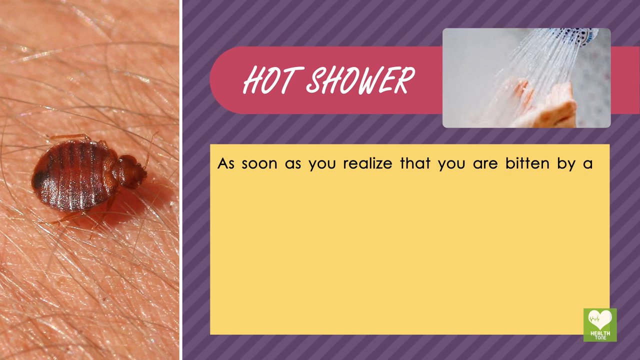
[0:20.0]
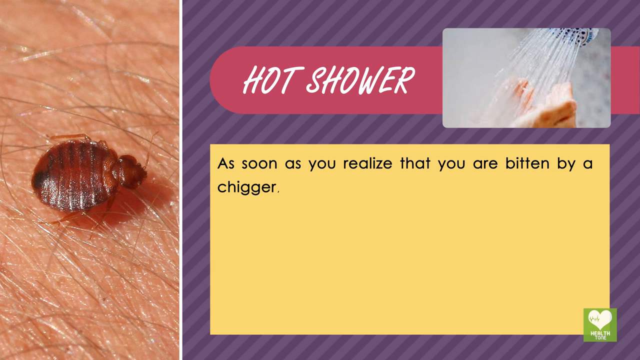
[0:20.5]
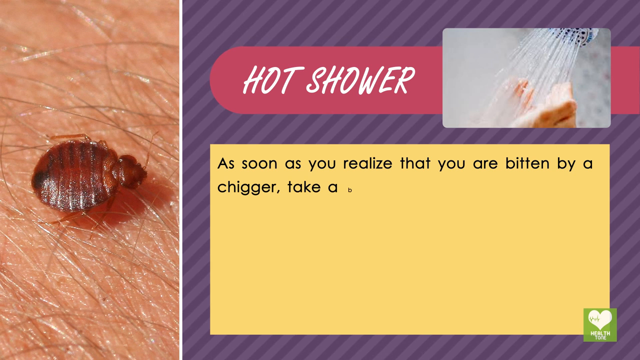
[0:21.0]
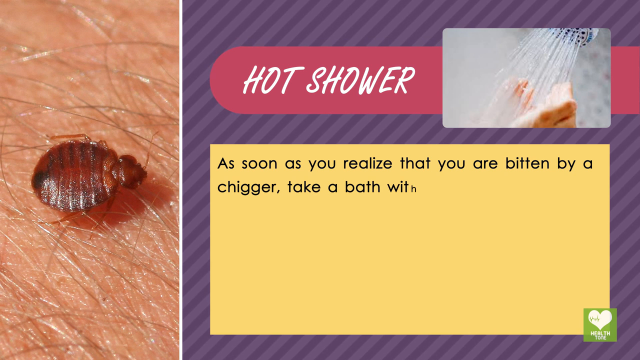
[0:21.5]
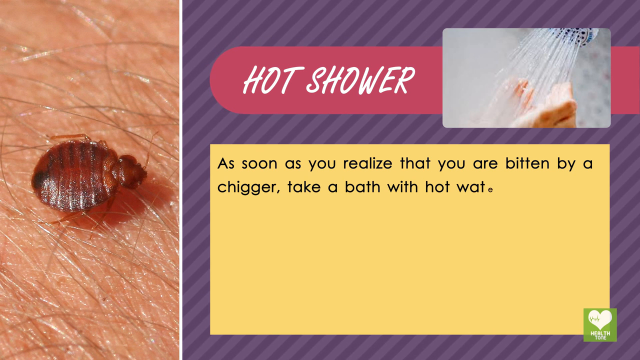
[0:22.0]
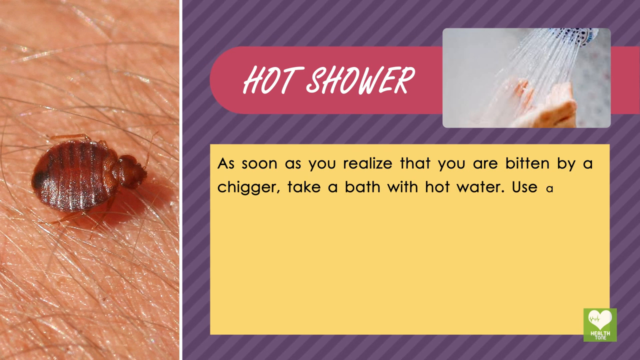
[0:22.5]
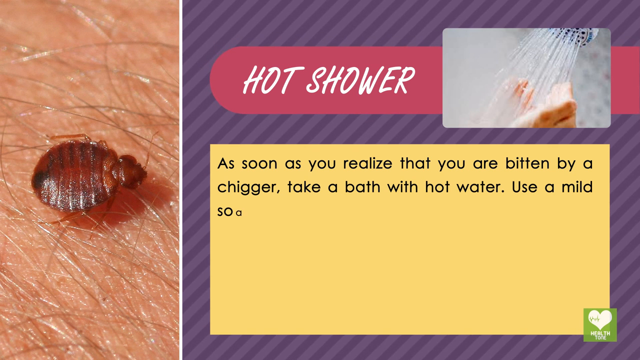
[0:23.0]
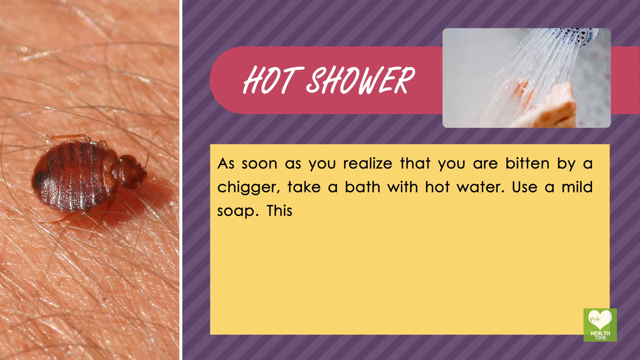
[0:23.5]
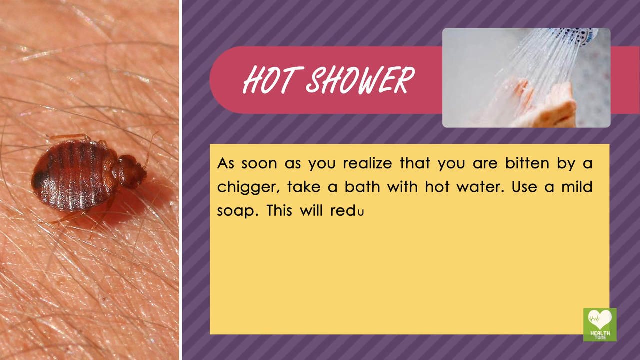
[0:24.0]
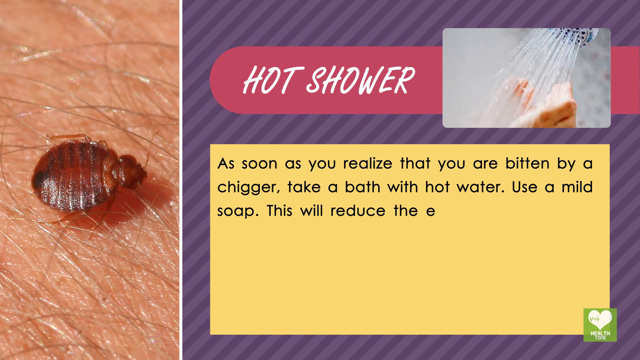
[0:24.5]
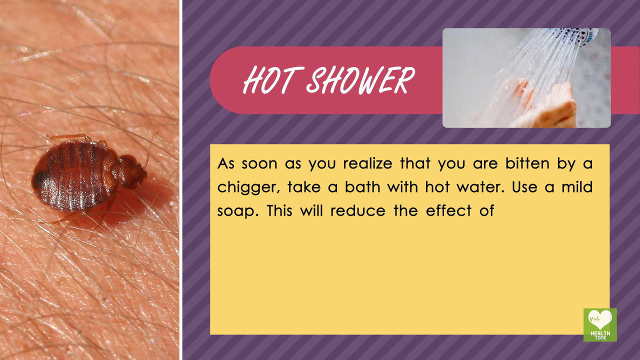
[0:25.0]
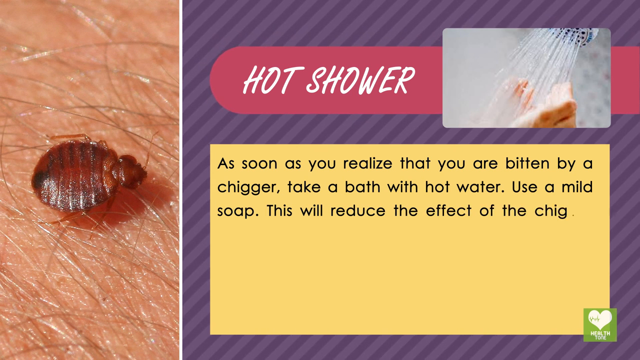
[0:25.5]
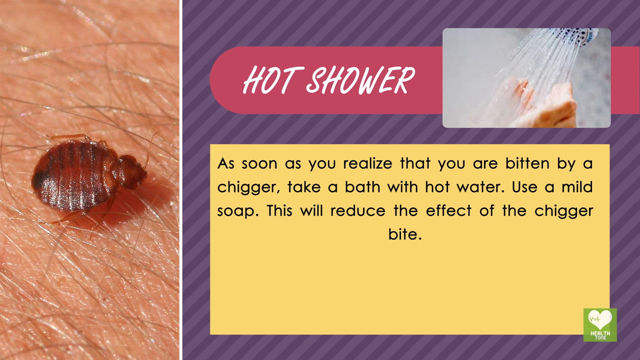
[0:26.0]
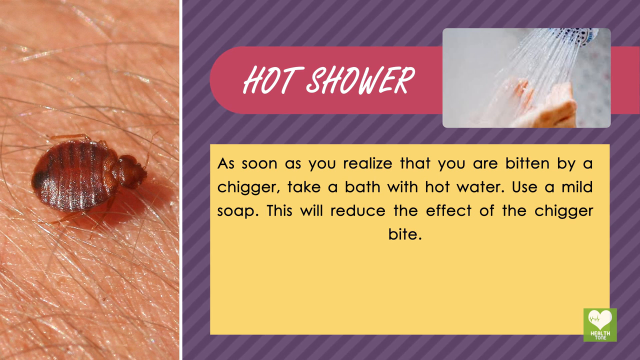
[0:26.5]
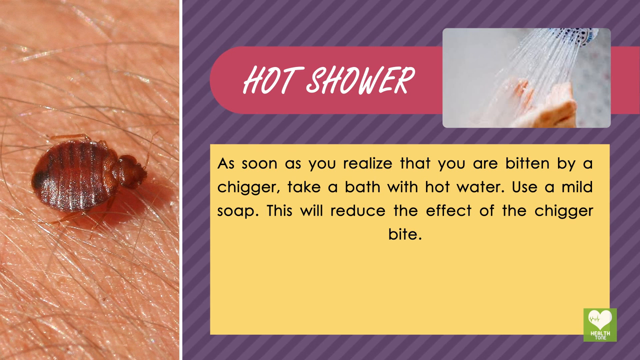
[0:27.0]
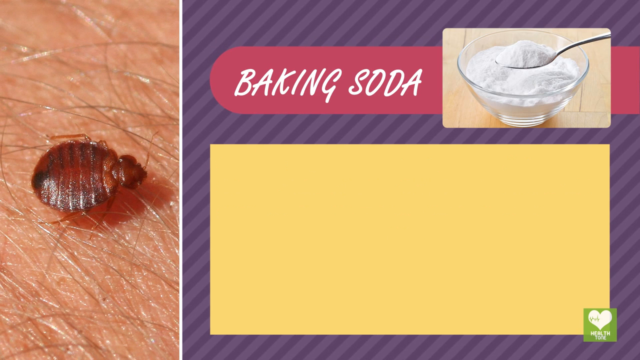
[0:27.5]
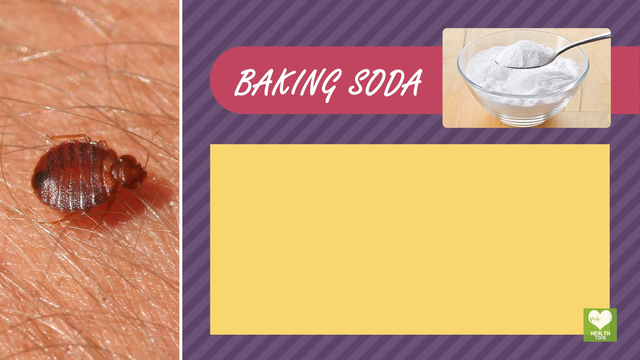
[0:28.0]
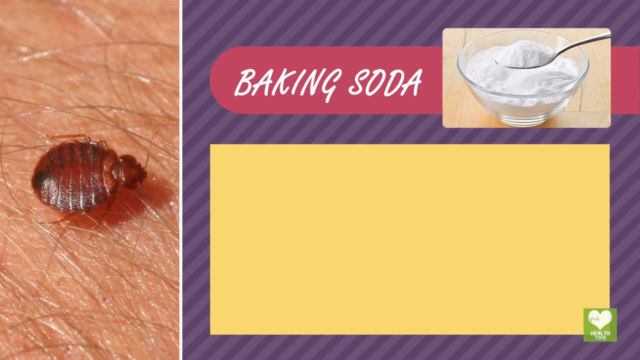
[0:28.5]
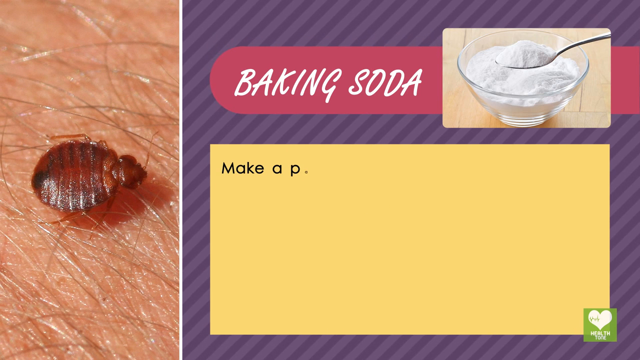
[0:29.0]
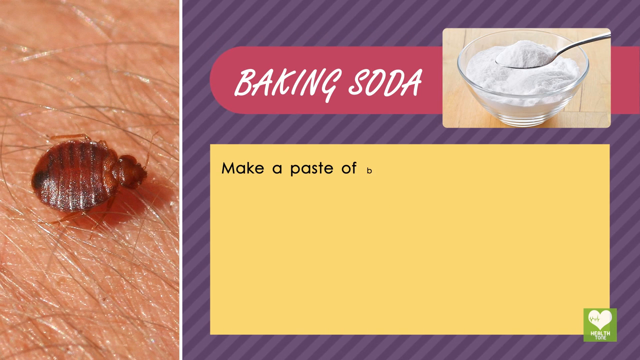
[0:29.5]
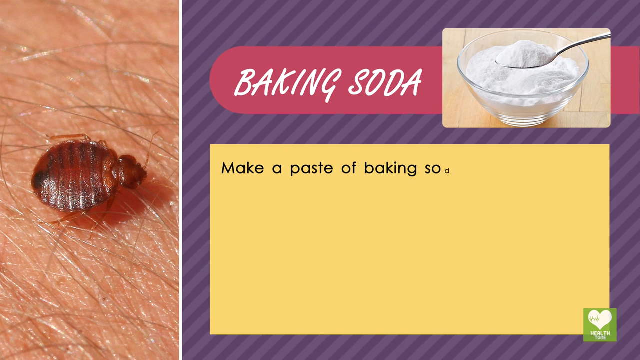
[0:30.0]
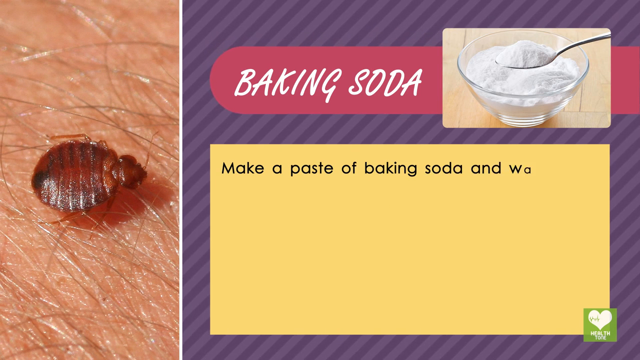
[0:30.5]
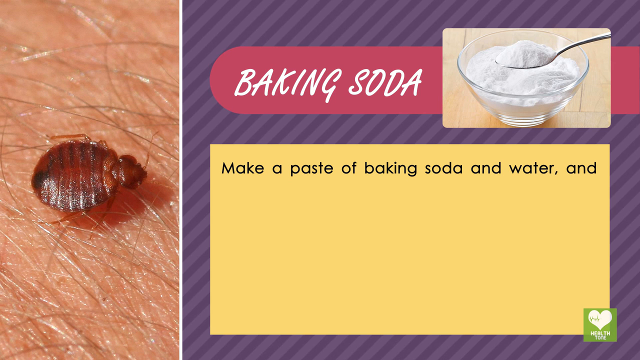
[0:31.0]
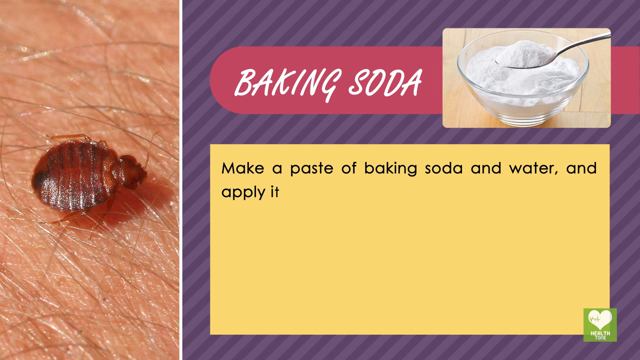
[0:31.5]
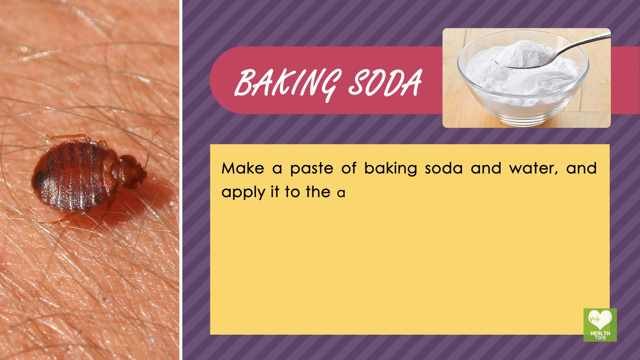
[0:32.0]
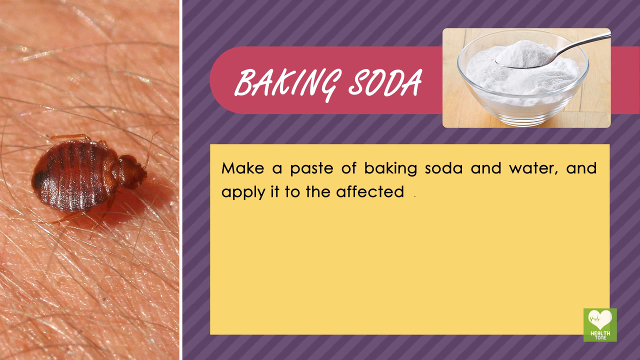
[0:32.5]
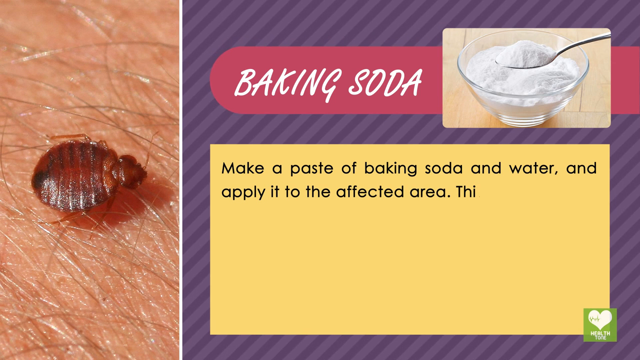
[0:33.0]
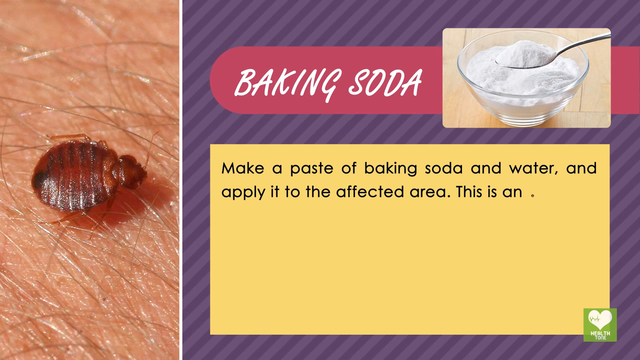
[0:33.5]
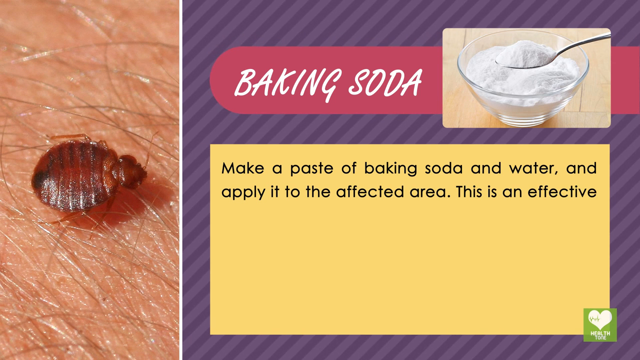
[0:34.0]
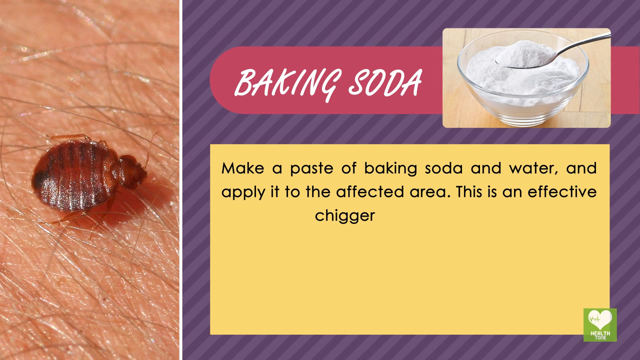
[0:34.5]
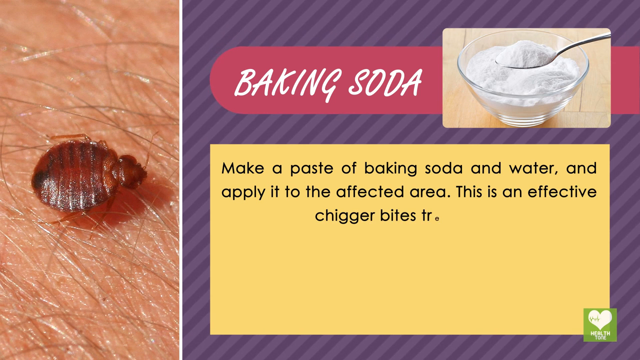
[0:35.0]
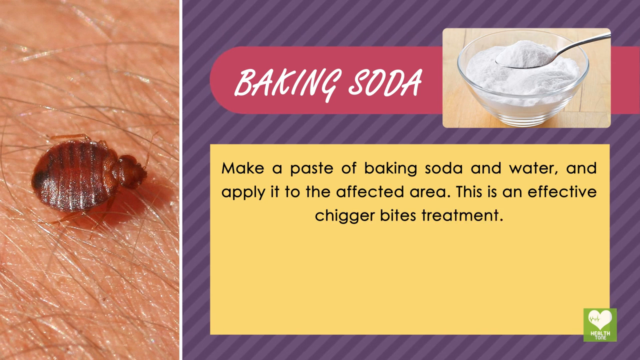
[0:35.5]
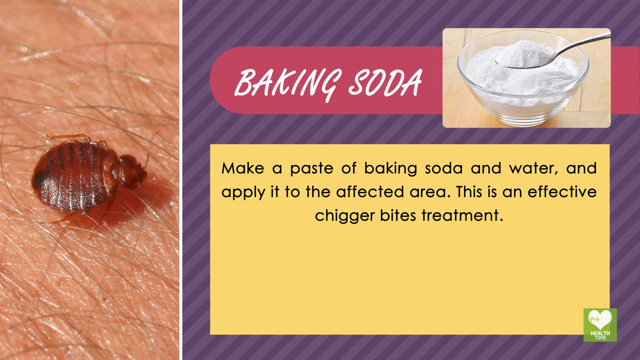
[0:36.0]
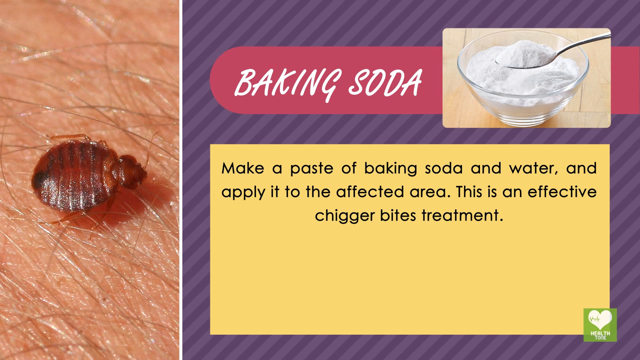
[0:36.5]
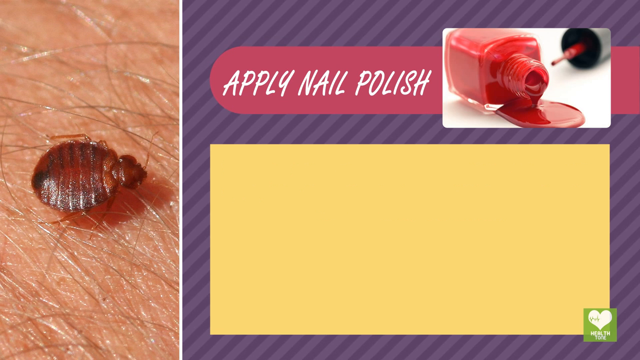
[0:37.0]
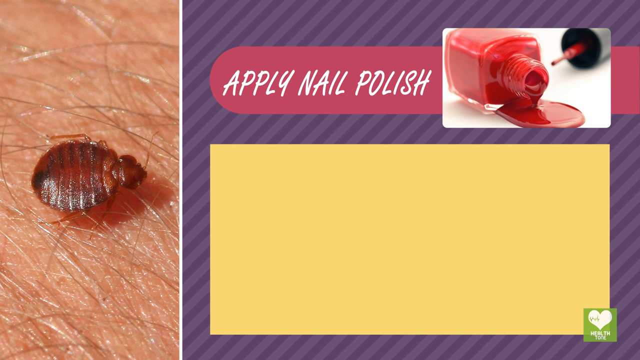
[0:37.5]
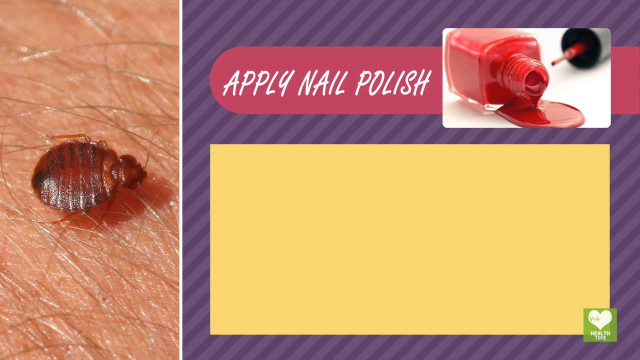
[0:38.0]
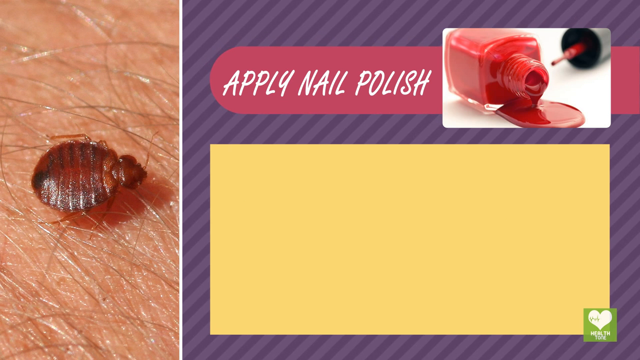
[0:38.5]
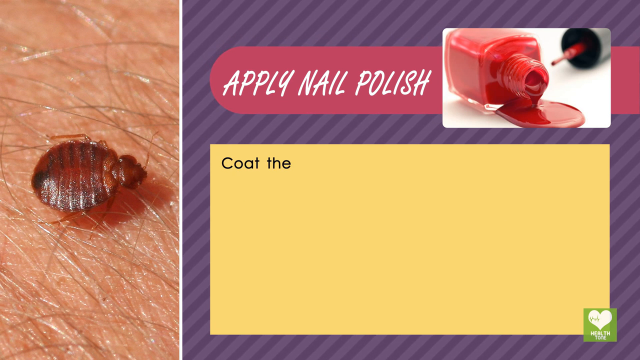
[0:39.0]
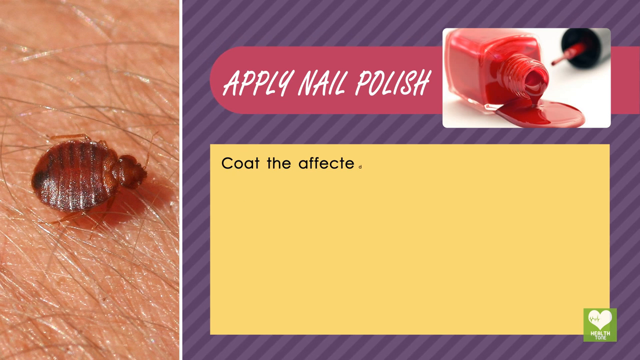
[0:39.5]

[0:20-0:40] The yellow box text continues: "by a chigger, take a bath with hot water. Use a mild soap. This will reduce the effect of the chigger bite." The next remedy is baking soda, and a new picture directly to the right of the headline shows a big clear glass bowl of baking soda with a spoon taking a spoonful out of it. The bowl is on top of what appears to be a tile or light tan surface with horizontal and vertical lines throughout the picture. The instructions in the yellow box read: "make a paste of baking soda and water and apply it to the affected area. This is an effective chigger bites treatment." The logo, a light green box with a white heart, is in the bottom right-hand corner of the screen.